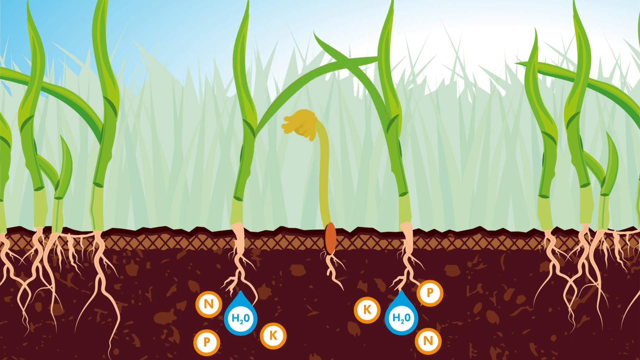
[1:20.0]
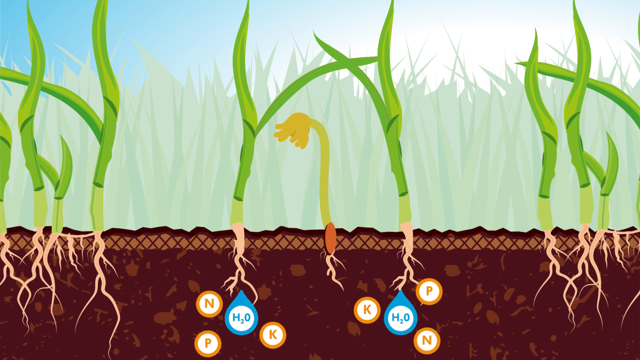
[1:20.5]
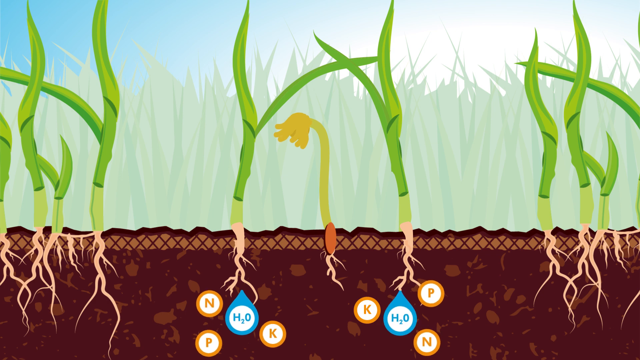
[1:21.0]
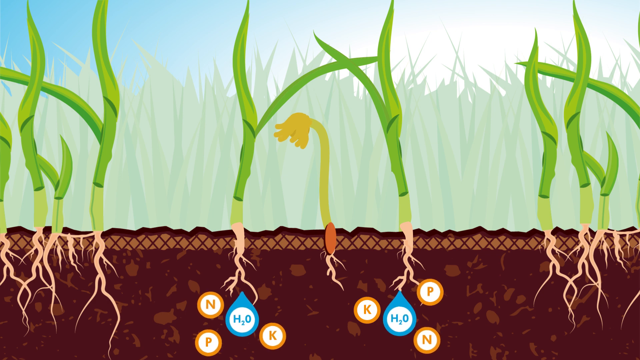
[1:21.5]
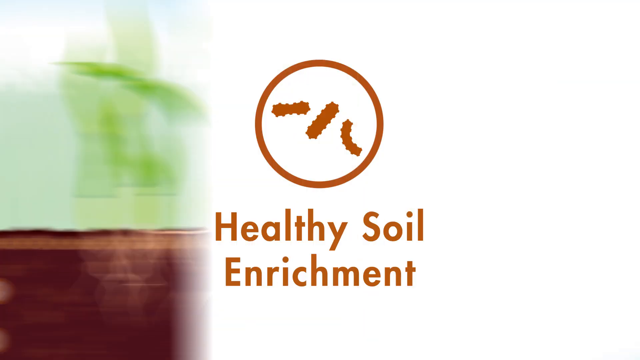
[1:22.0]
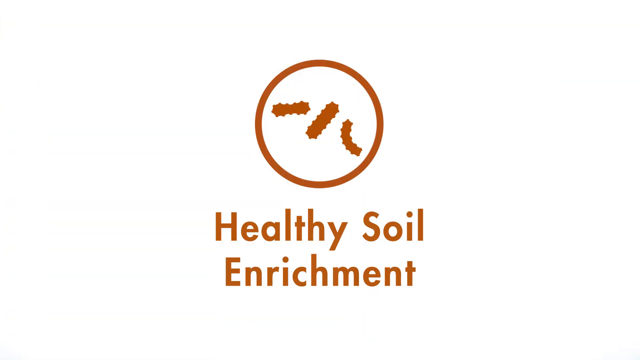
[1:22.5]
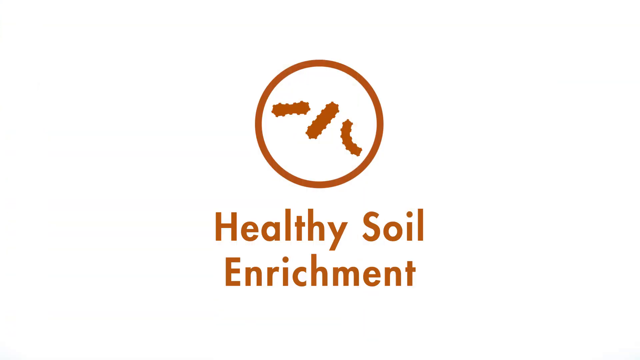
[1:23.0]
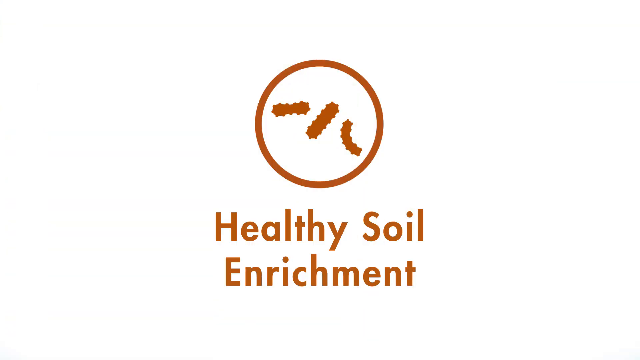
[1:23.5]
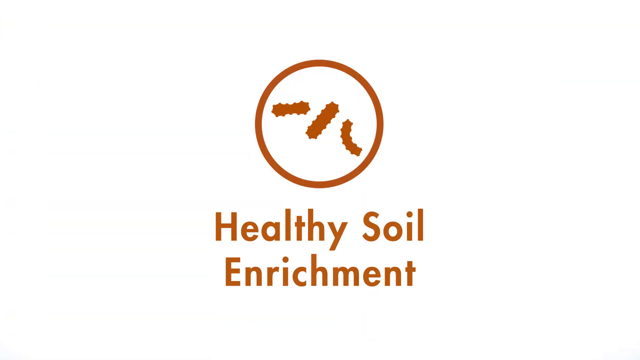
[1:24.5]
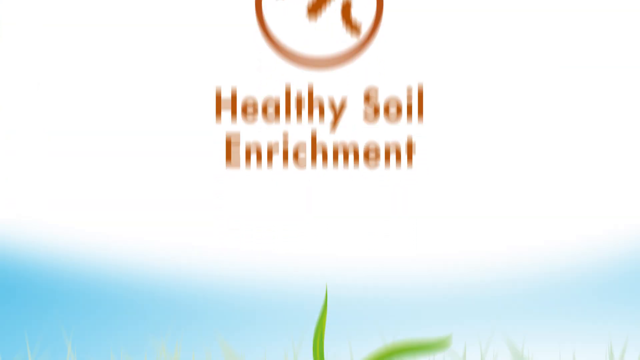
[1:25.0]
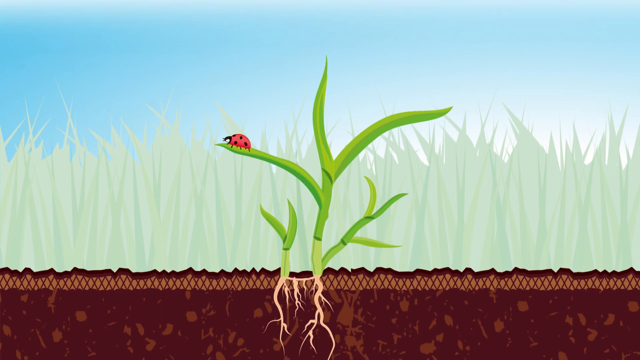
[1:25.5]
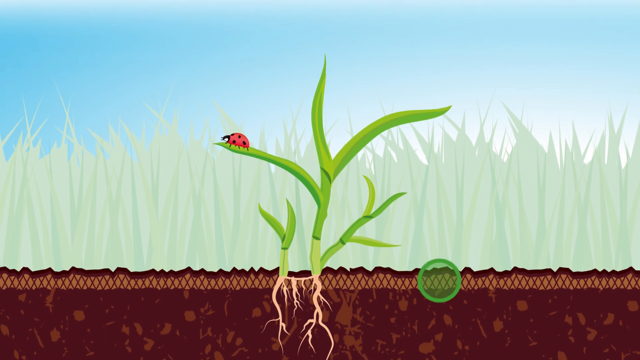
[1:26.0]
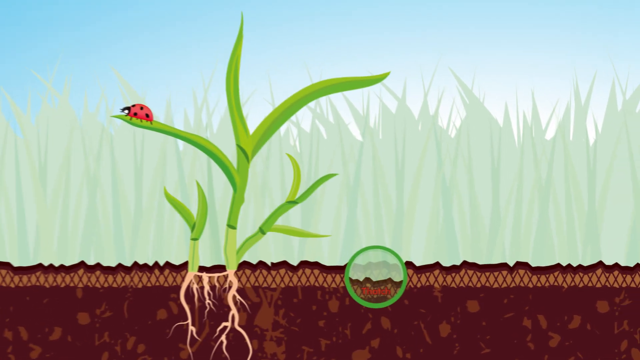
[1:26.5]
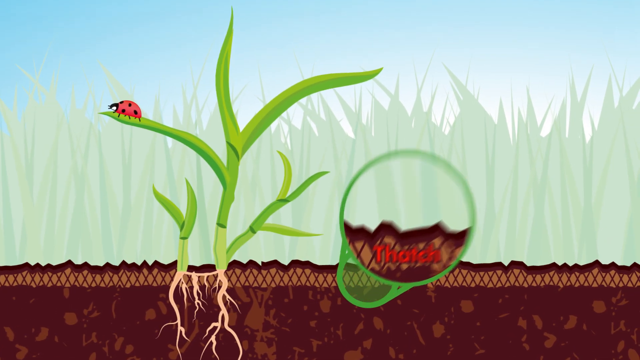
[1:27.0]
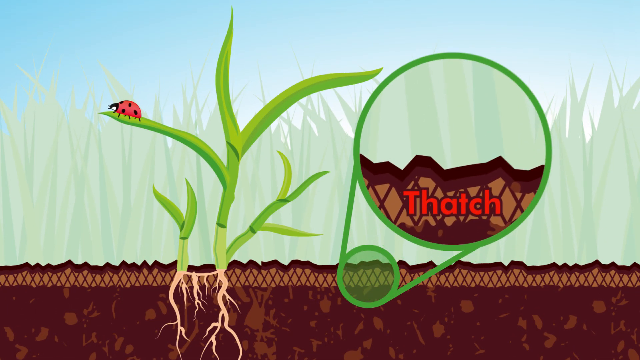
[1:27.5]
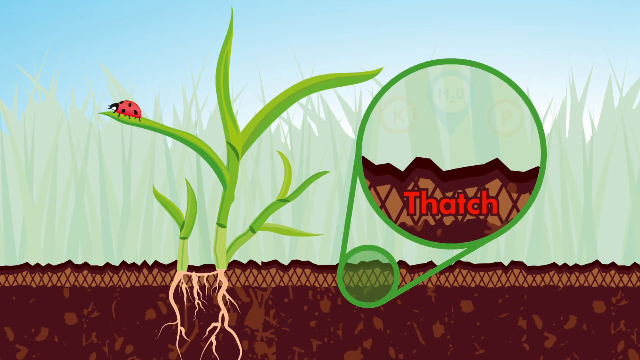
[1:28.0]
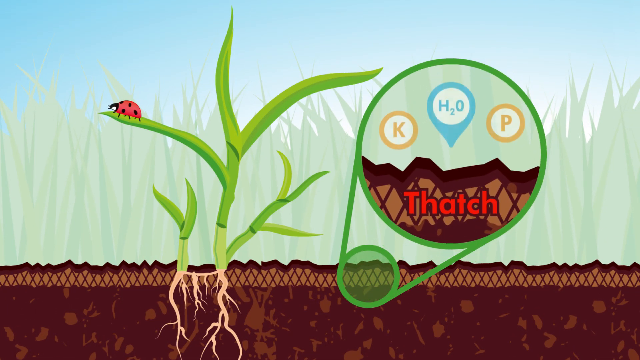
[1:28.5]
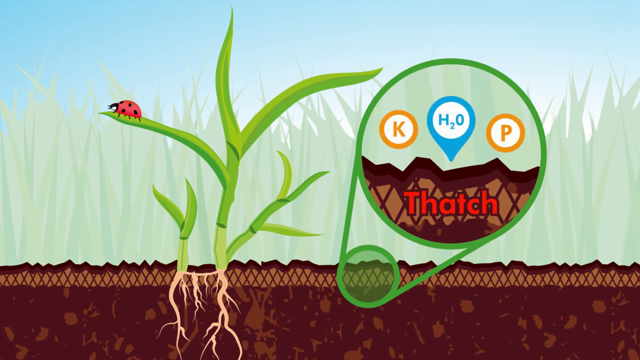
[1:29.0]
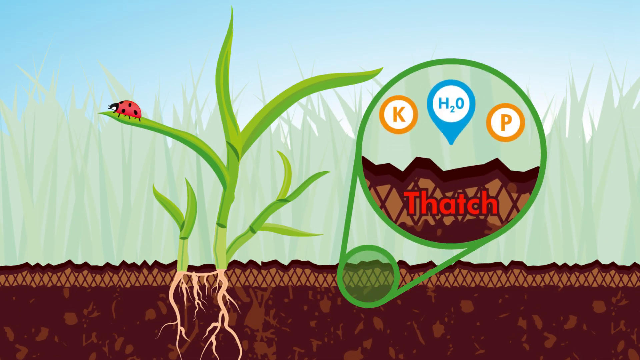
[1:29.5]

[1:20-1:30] The words "healthy soil enrichment" appear. Water, labeled H2O, is shown, along with what appears to be potassium under the roots, and nitrogen. The soil looks very rich.